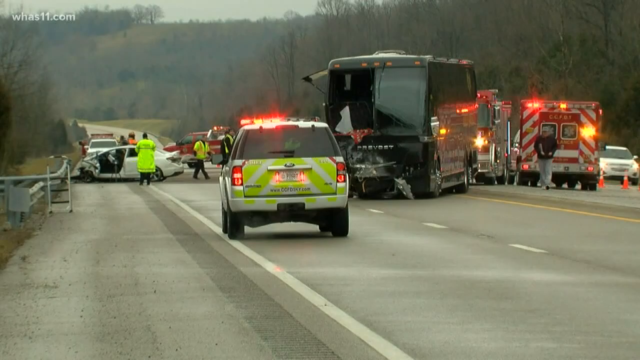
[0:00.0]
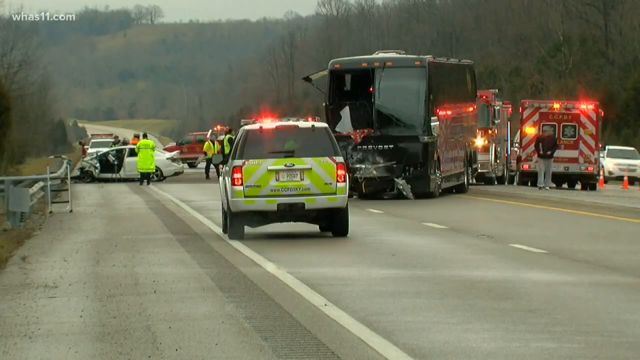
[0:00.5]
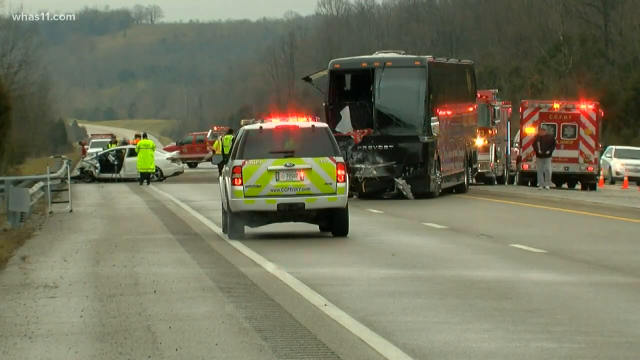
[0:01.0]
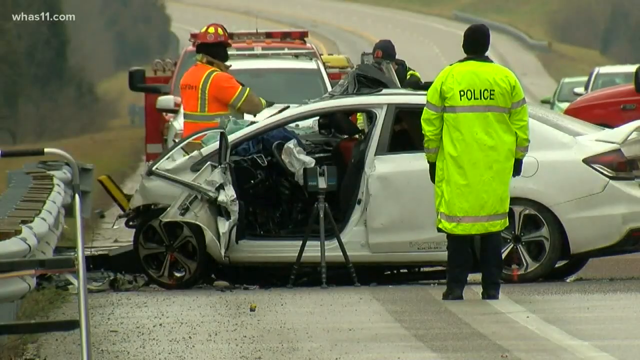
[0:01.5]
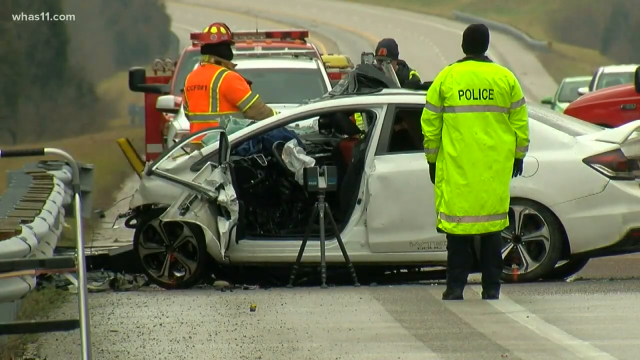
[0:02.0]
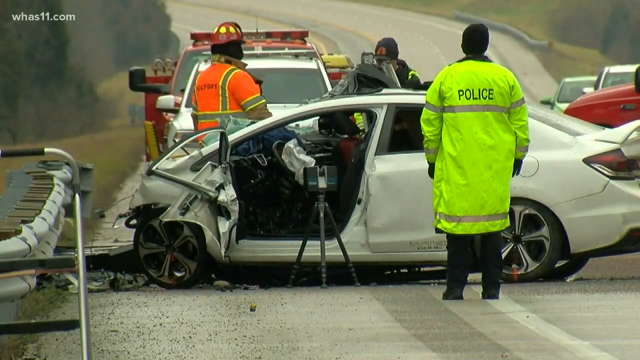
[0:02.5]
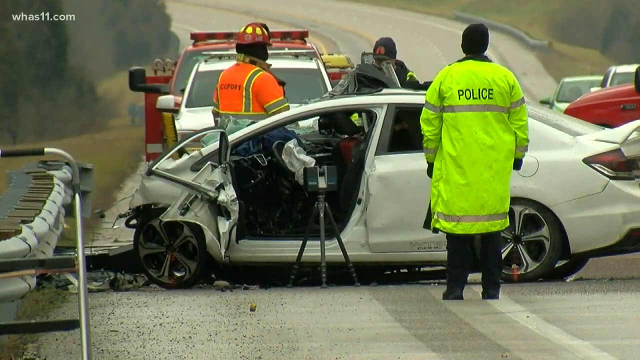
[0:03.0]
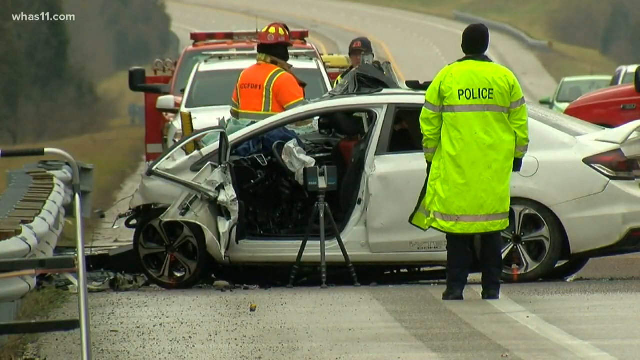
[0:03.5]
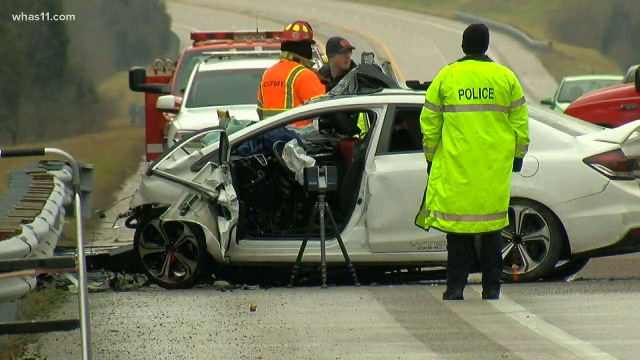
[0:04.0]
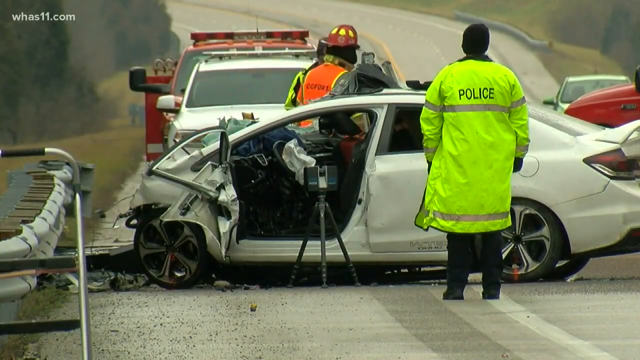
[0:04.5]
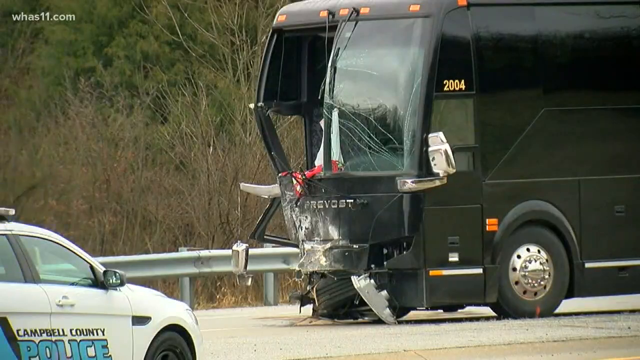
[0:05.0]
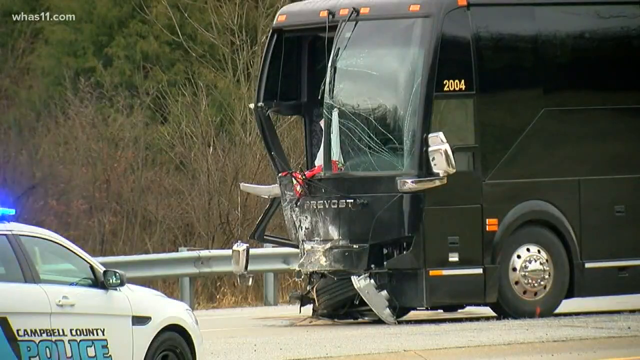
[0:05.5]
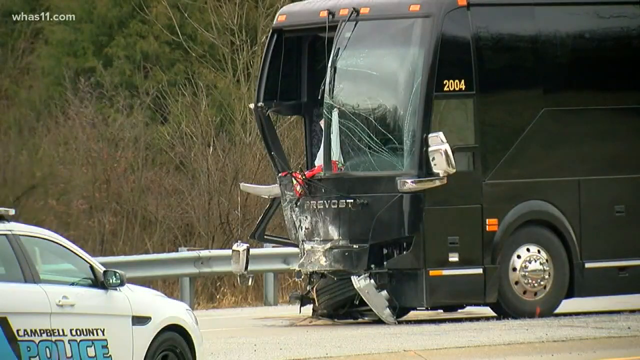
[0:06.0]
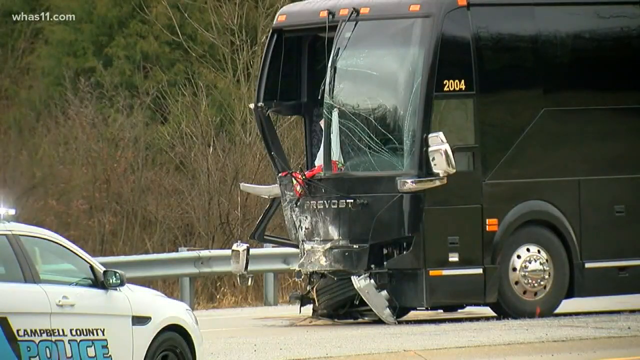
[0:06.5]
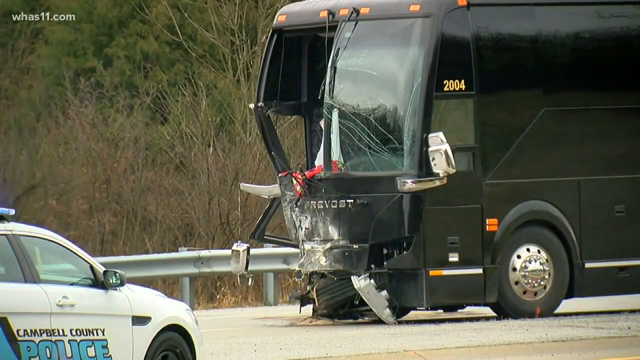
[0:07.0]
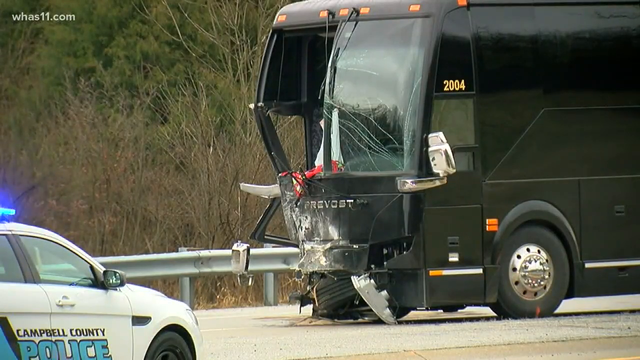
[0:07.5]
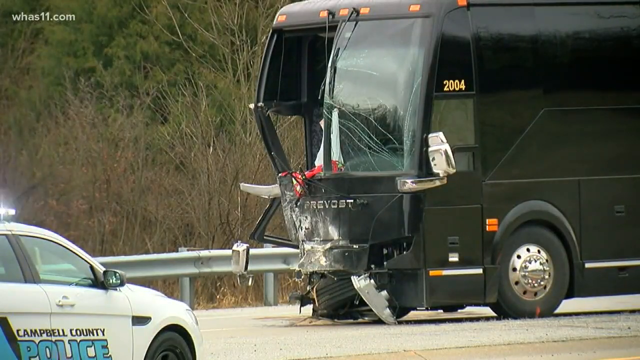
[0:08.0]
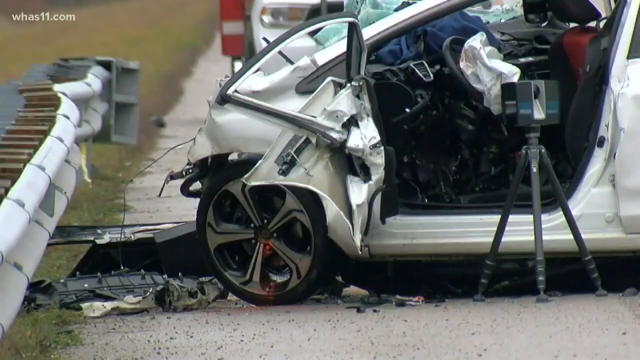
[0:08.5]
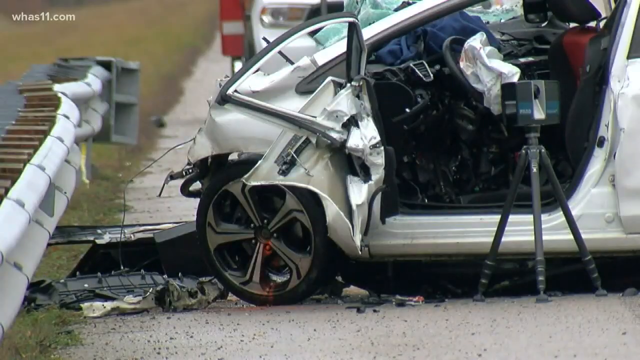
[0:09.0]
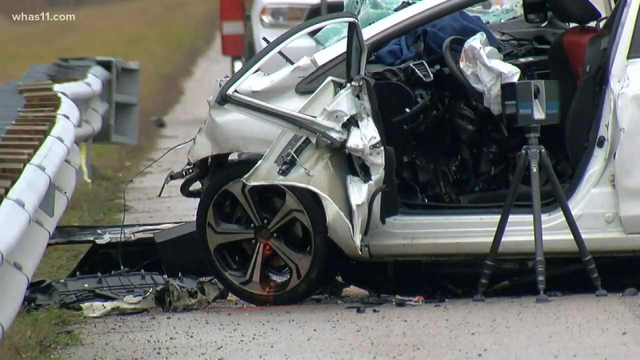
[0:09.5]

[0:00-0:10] Several vehicles are parked in the middle of a highway. A police officer in a green overall stands before a vehicle that looks badly wrecked at the front. It appears to be an accident scene: several ambulances are parked on the other side of the road, and police vehicles with sirens on top are also there. Police and servicemen attend to injured people. There are roadblocks, and vehicles coming from the other side of the highway cannot pass through. A policeman tries to help the injured, and people are ferried to an ambulance.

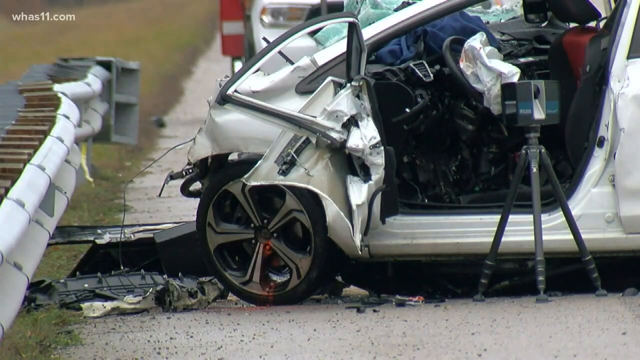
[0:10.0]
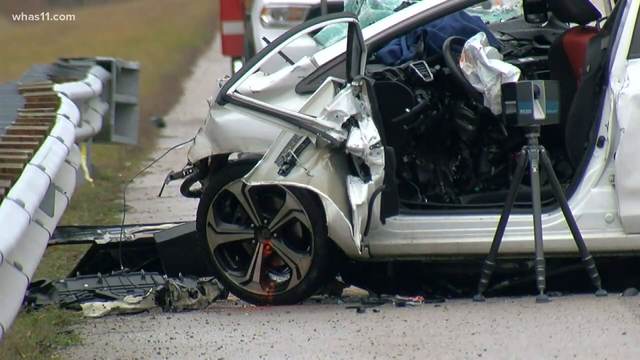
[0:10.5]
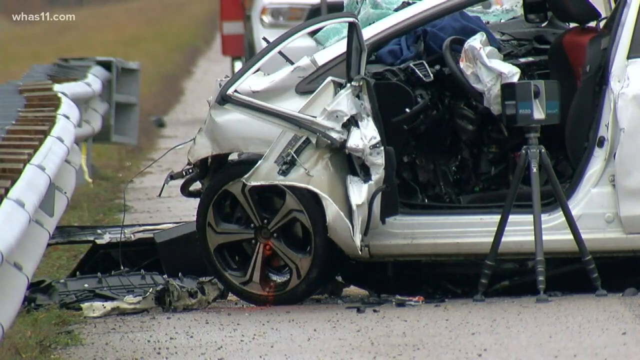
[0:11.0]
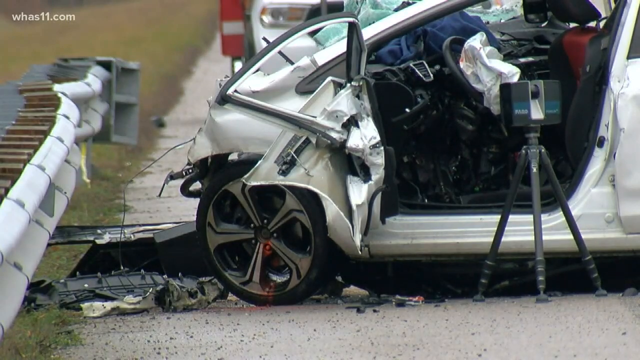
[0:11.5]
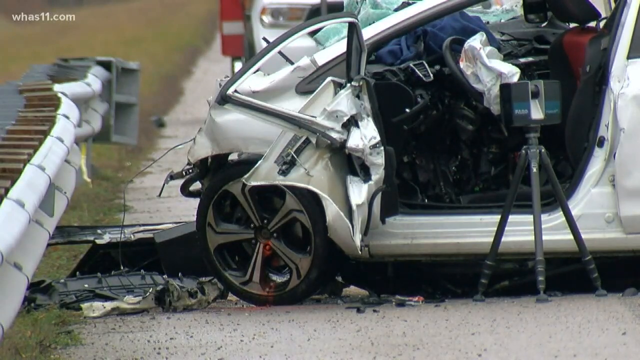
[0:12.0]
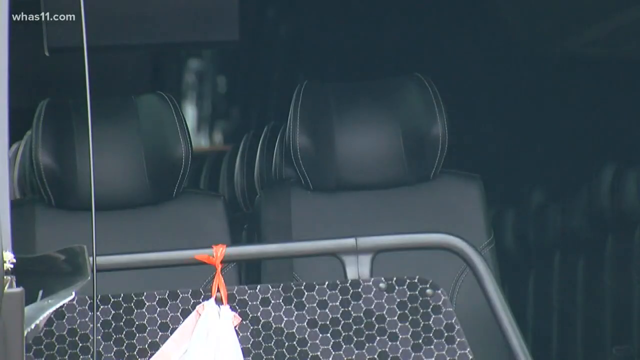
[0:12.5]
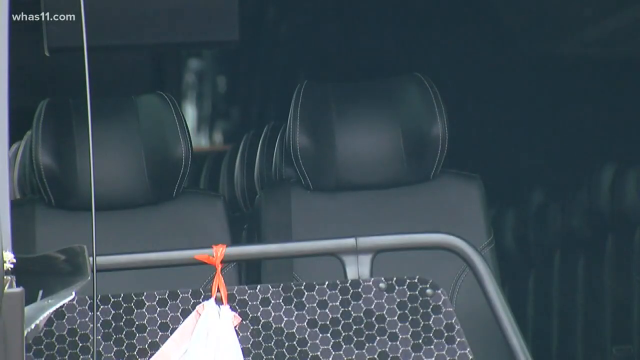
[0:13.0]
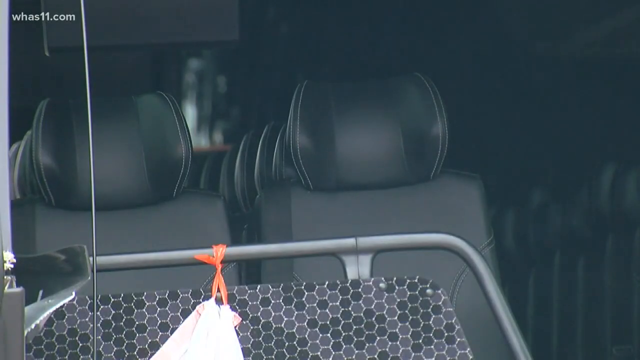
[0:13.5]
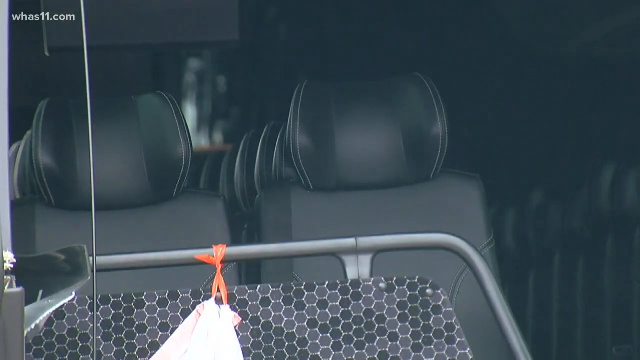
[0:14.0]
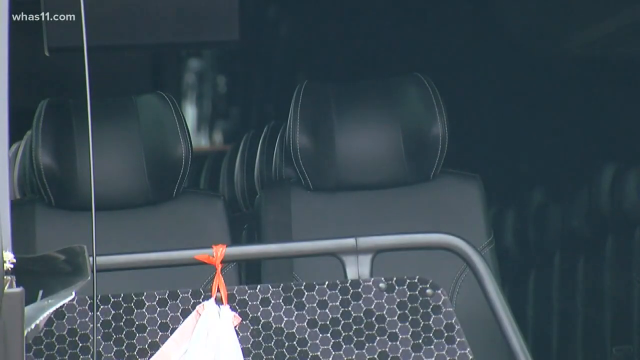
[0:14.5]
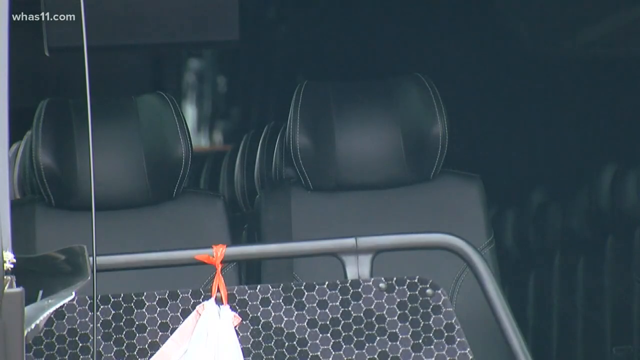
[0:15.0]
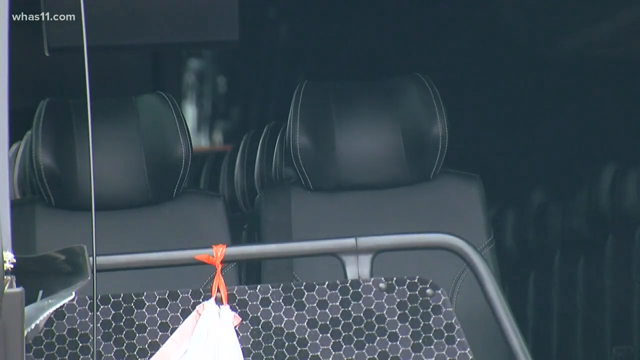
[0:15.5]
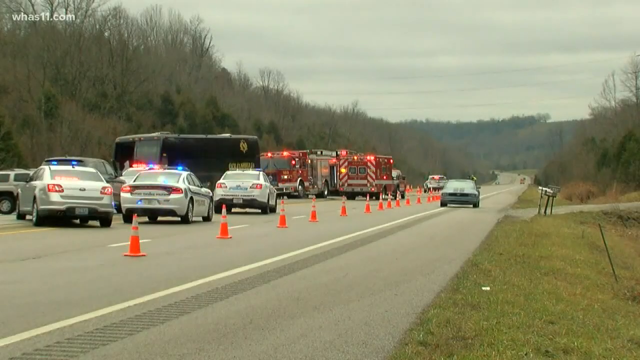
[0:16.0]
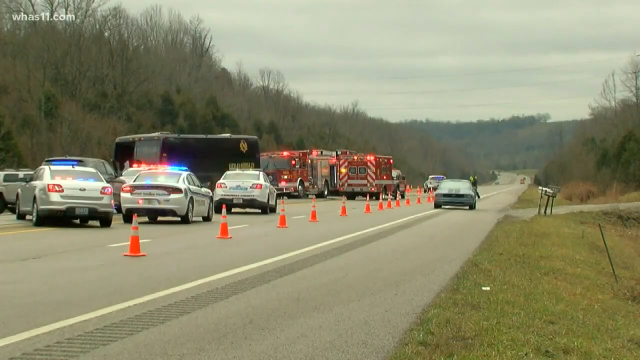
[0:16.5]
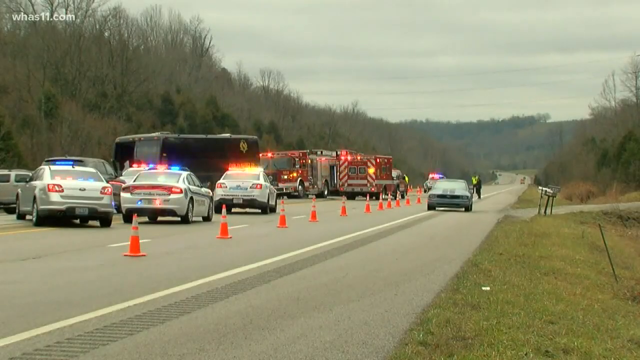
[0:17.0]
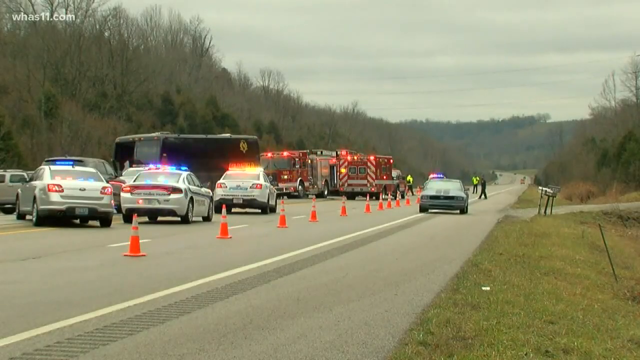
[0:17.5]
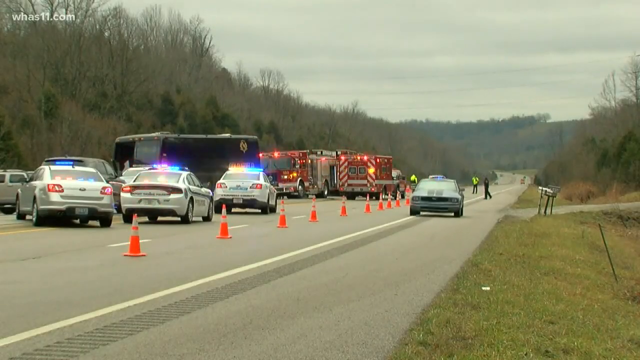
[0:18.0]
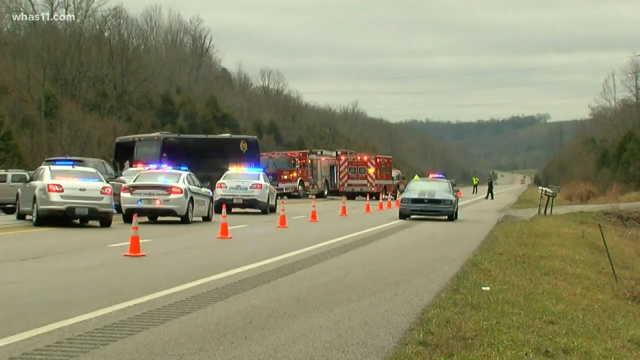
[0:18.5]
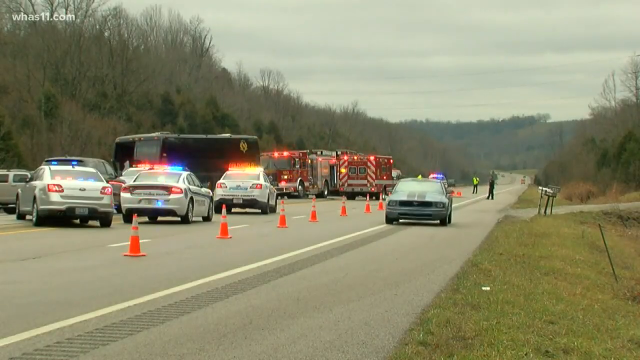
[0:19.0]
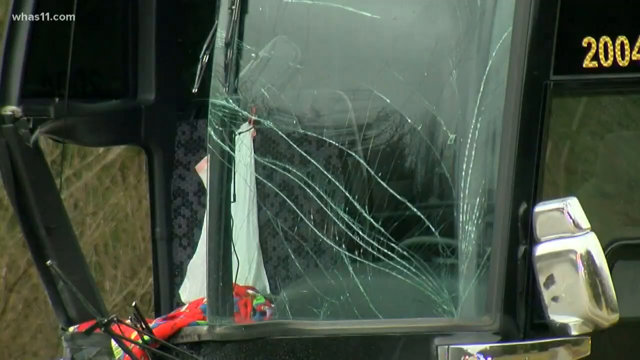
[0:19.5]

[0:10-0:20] The camera focuses on a road vehicle and zooms out on the impact. The white vehicle is badly damaged, its door badly damaged, and the rail on the road is knocked out. The scene is on a highway in a rural setting, surrounded by bushes, with trees and shrubs in the background. Quite a number of police vehicles with sirens on top and a number of ambulances are at the scene, where people are being rescued.